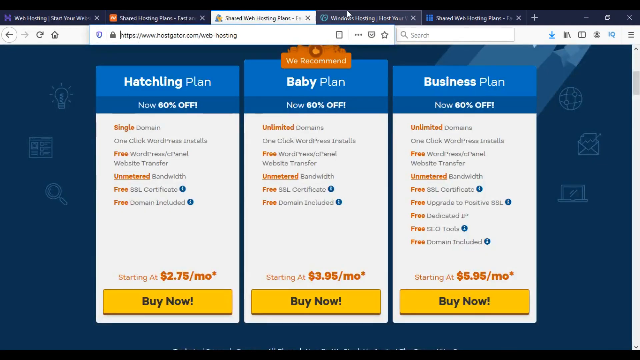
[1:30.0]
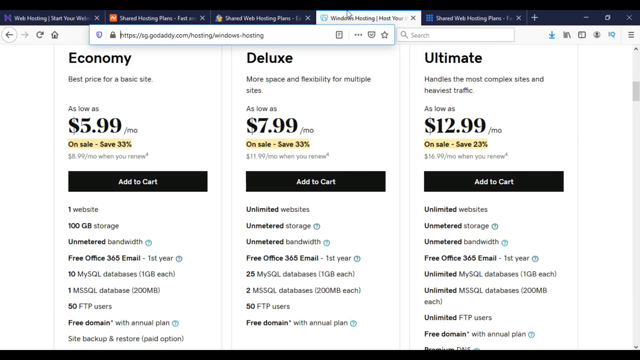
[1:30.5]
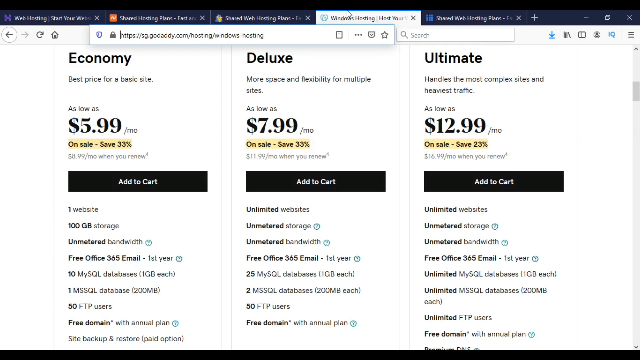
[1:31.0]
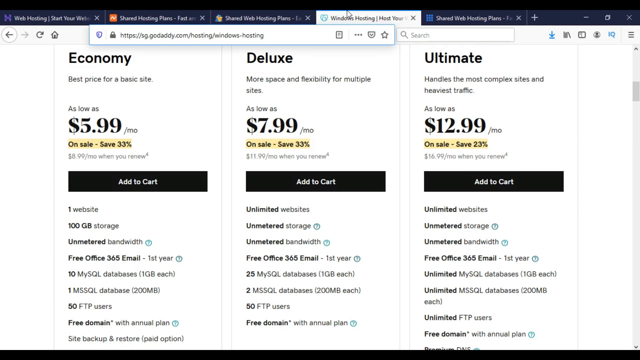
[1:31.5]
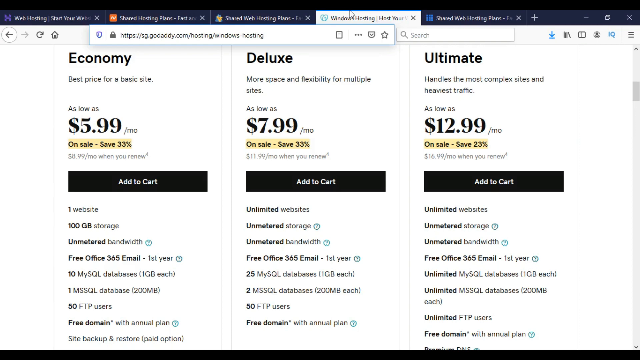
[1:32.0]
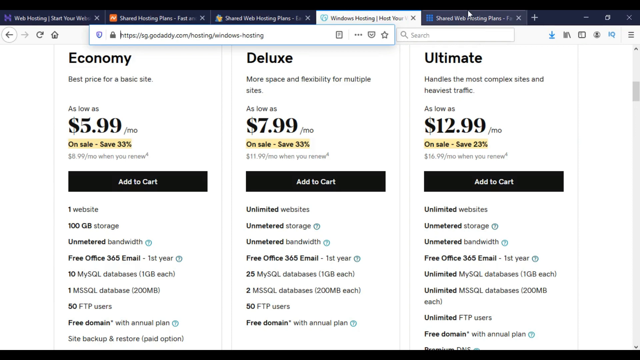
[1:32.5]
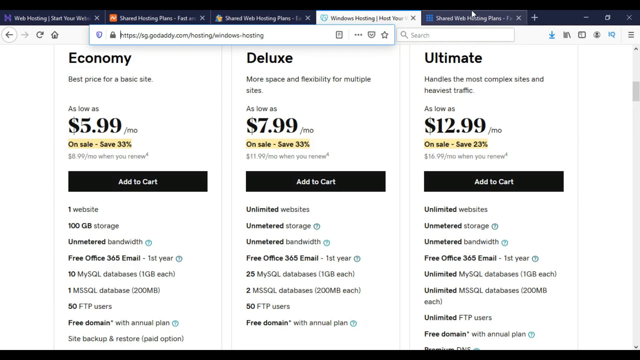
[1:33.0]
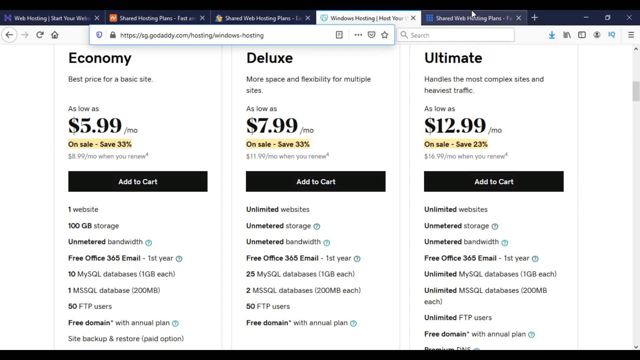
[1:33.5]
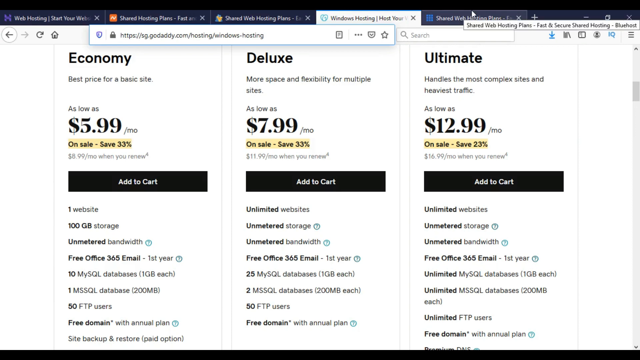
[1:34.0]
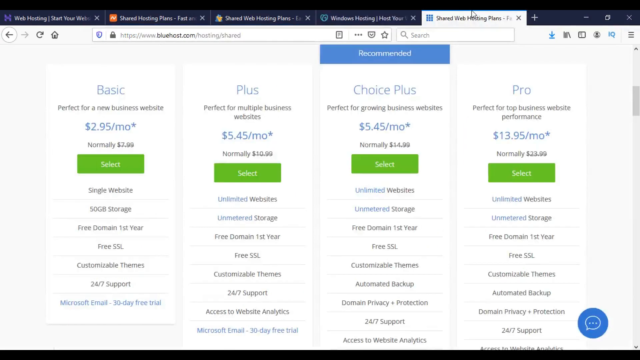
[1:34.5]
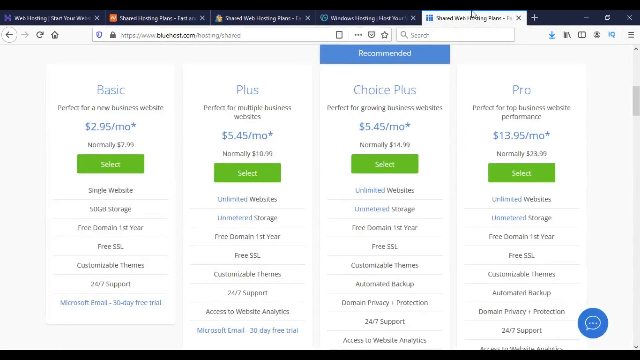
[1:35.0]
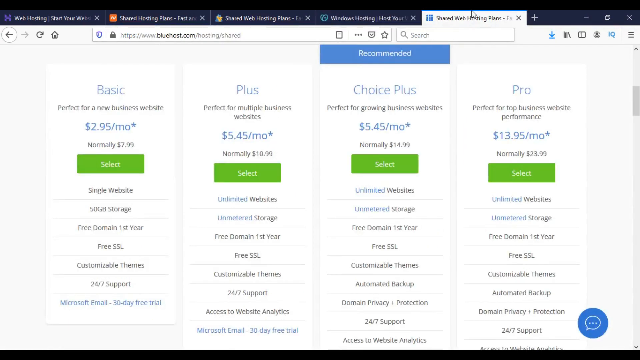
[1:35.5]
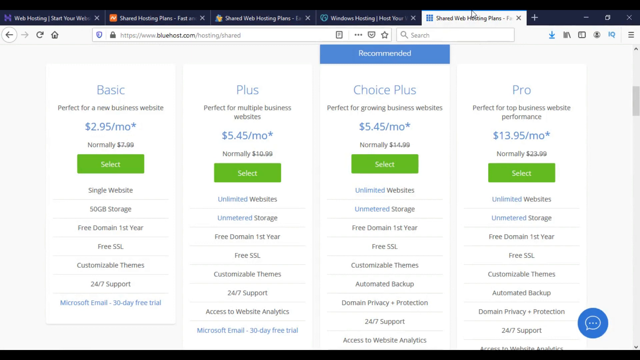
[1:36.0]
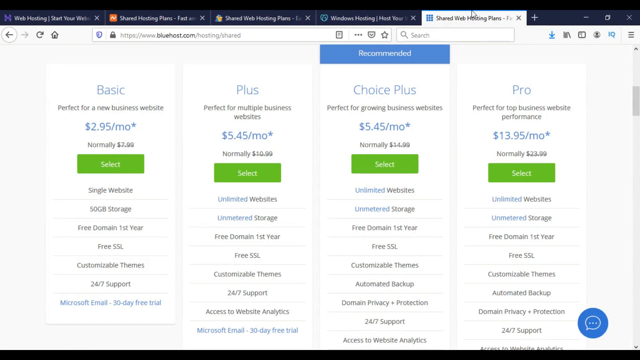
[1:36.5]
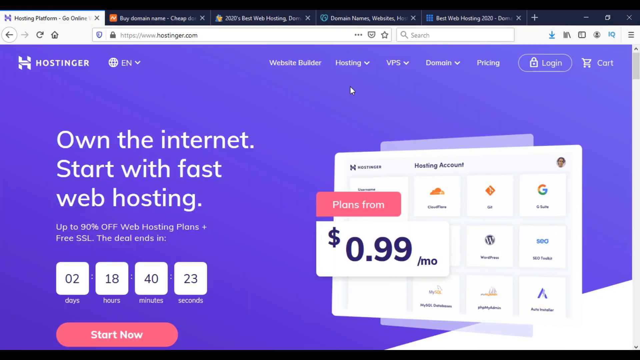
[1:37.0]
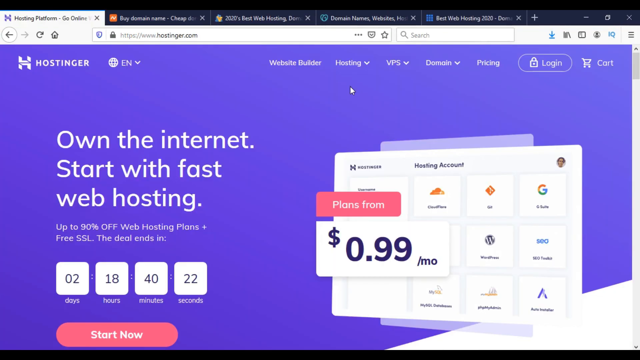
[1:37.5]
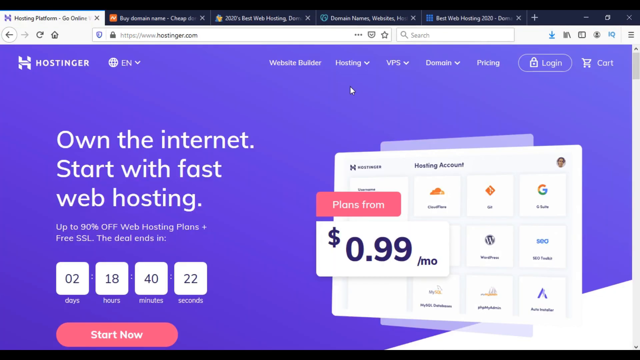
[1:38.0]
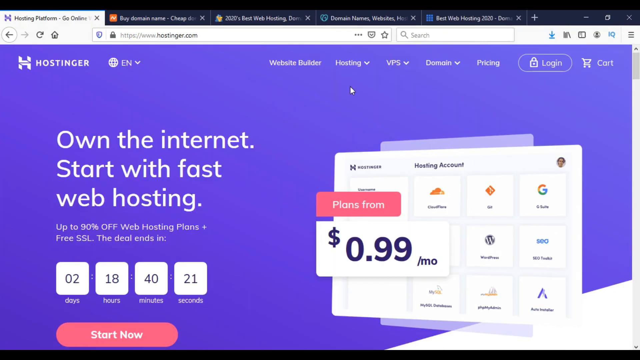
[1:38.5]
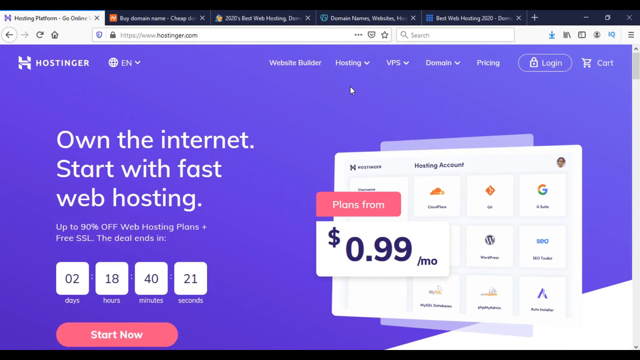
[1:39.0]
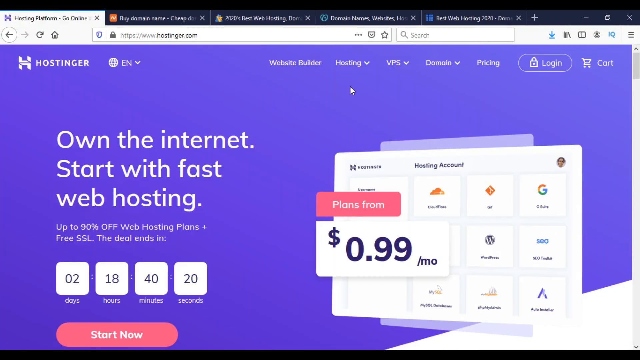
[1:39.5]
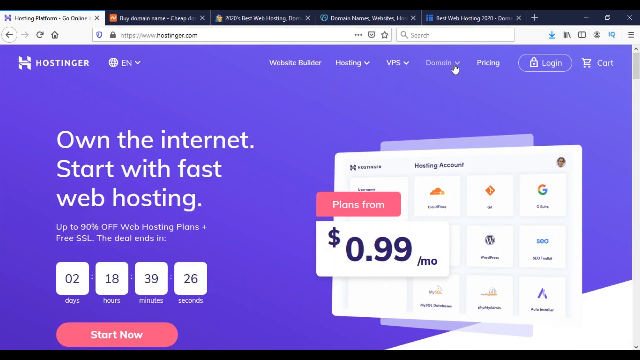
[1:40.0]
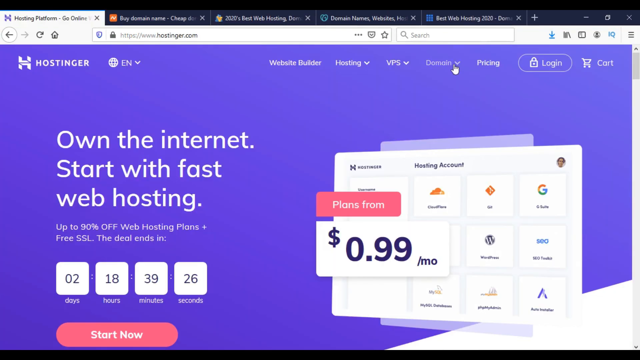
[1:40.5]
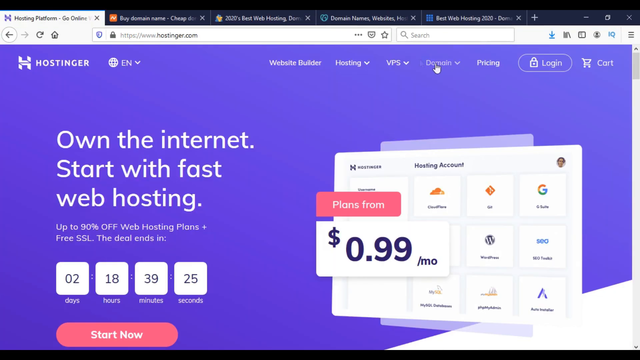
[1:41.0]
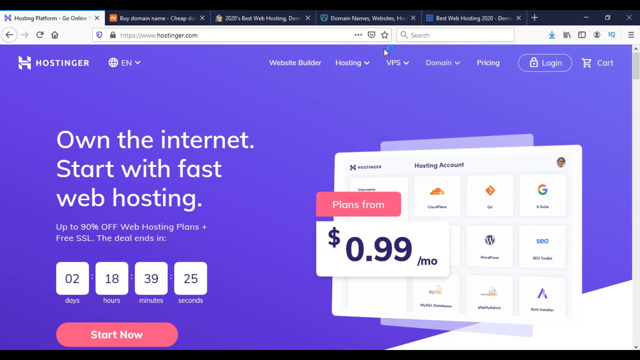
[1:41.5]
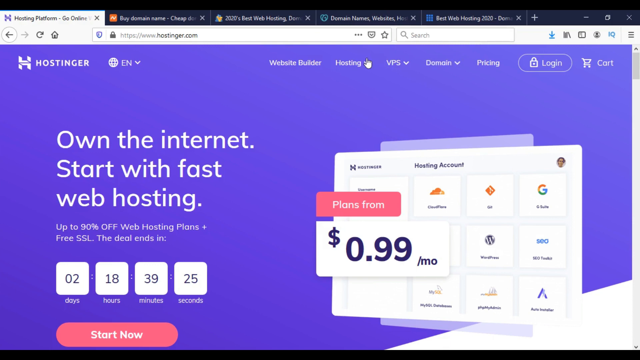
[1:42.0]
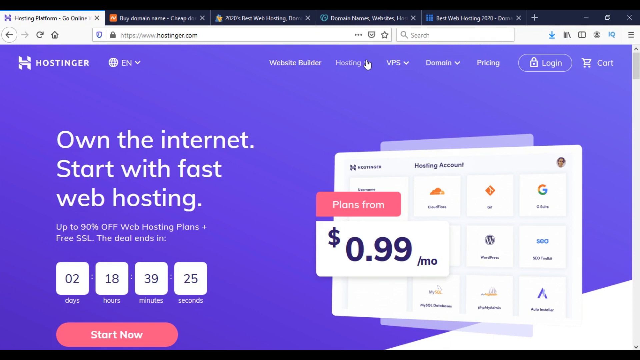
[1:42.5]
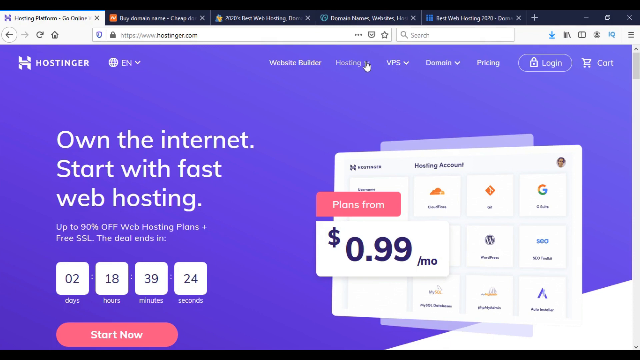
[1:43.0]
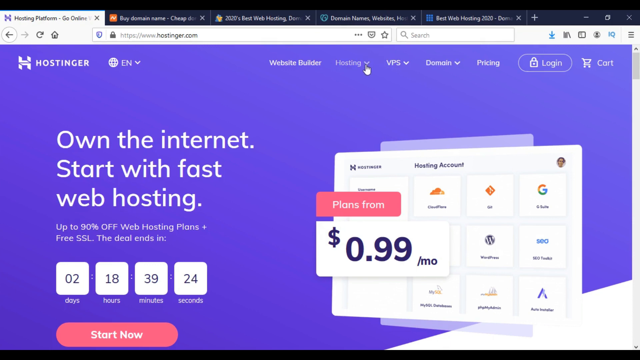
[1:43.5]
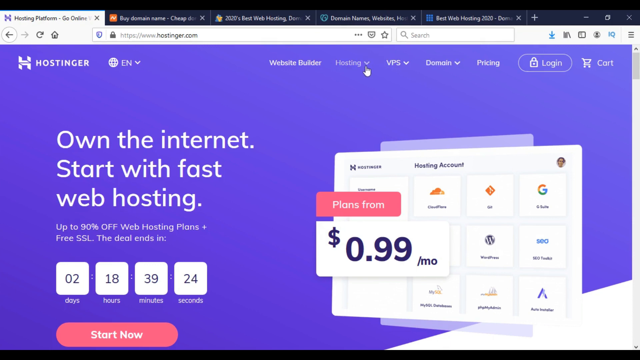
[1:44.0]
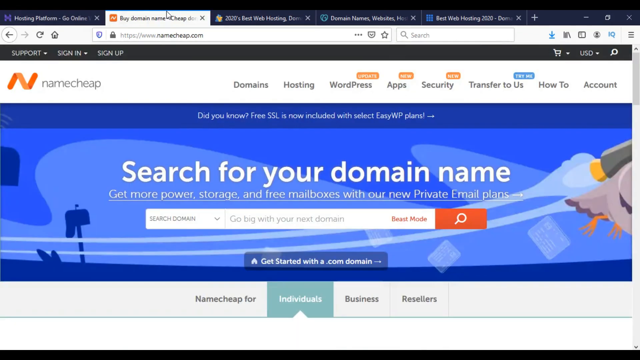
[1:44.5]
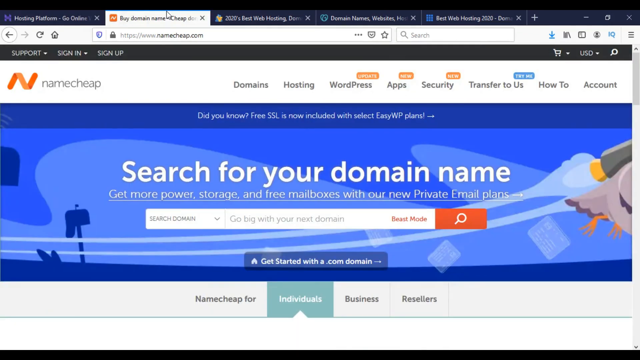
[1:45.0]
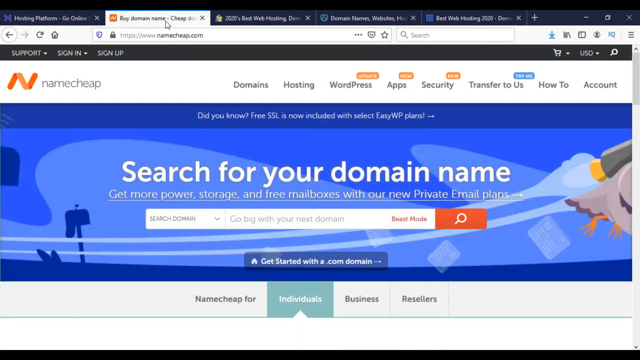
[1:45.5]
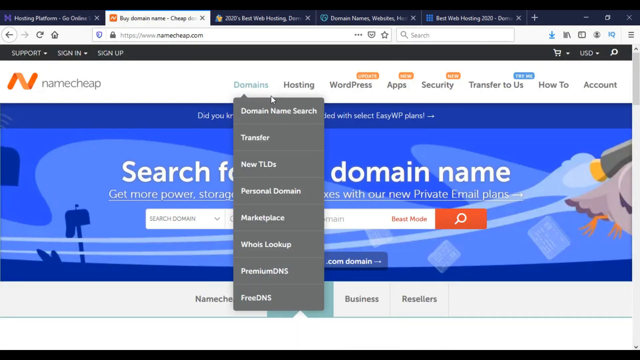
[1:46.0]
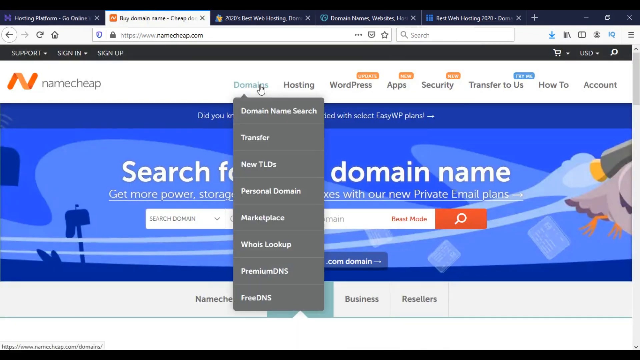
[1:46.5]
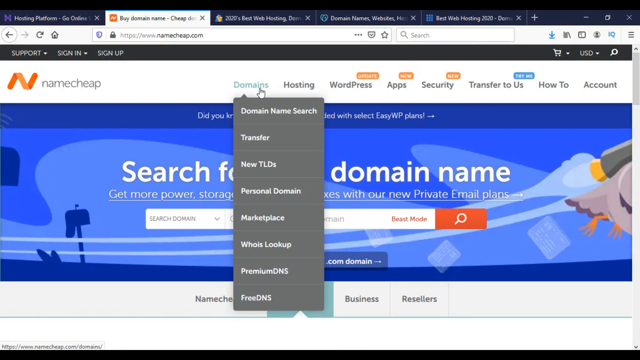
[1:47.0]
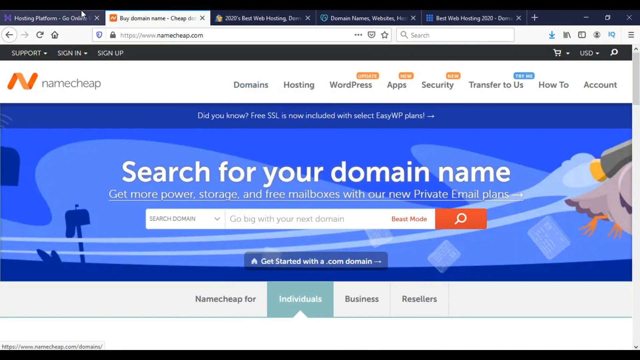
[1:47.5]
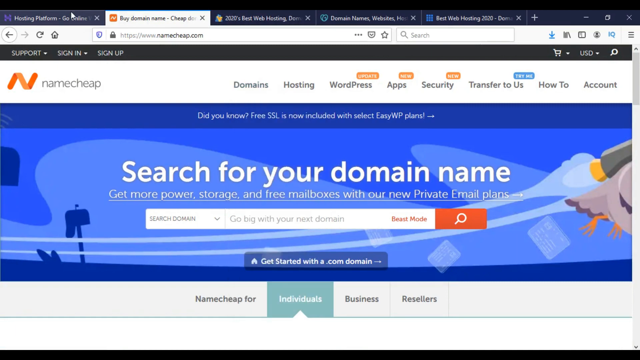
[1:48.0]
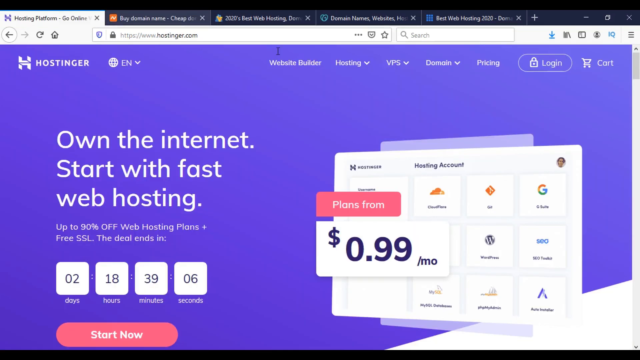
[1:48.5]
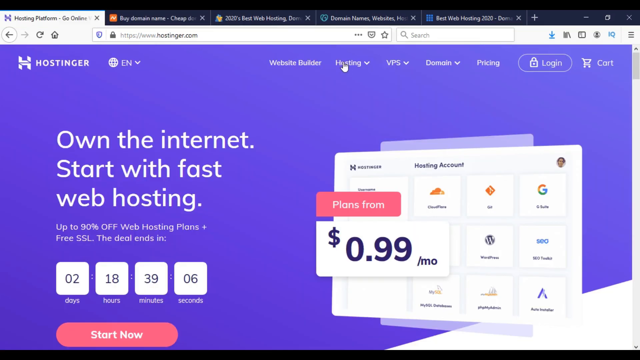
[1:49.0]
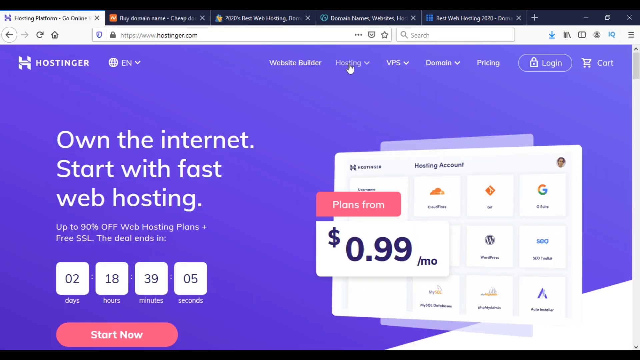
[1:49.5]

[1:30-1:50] A page appears over a background that looks kind of blue, with pencil sketches of light bulbs, keys, files and similar things. Front and center are the site's pricing plans. The hatchling plan is 60% off, with its benefits listed underneath. In the middle is the baby plan, marked at the top as recommended; it is also 60% off and offers about the same, maybe with a little more unlimited features. Last is the business plan, also 60% off, with unlimited access to more things and free access to certain business tools. The prices are $2.75 a month for the hatchling plan, $3.95 a month for the baby plan, and $5.95 for the business plan. The presenter then flips to another website to compare prices, whose plans are called economy at $5.99, deluxe at $7.99, and ultimate at $12.99; this apparently is his go-to. Finally he flips one more page.